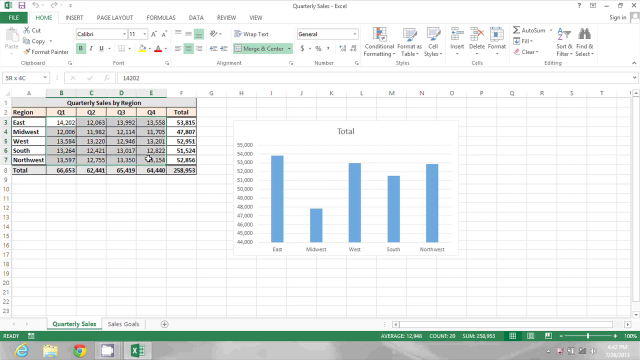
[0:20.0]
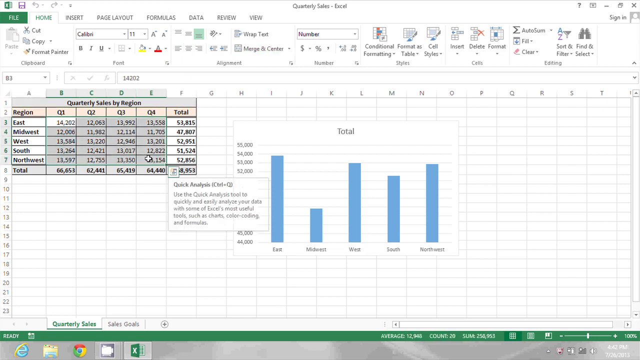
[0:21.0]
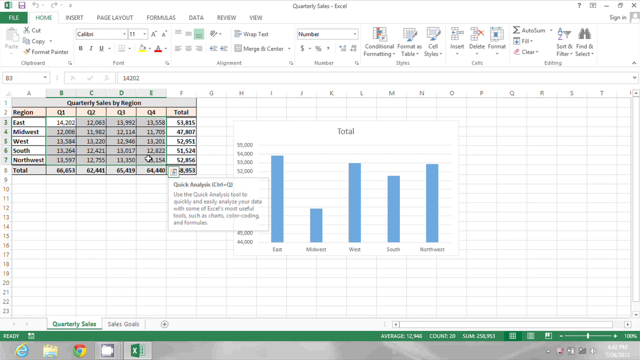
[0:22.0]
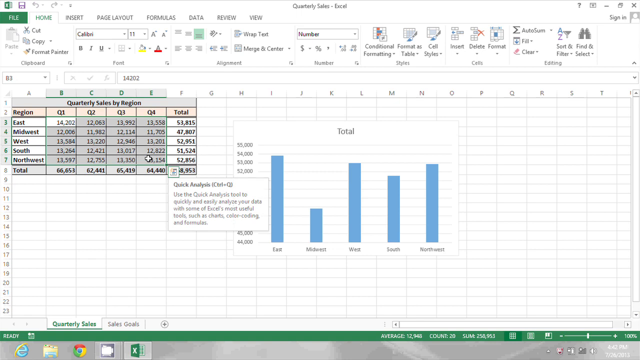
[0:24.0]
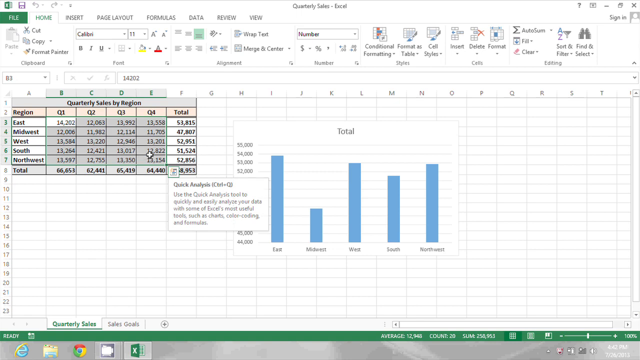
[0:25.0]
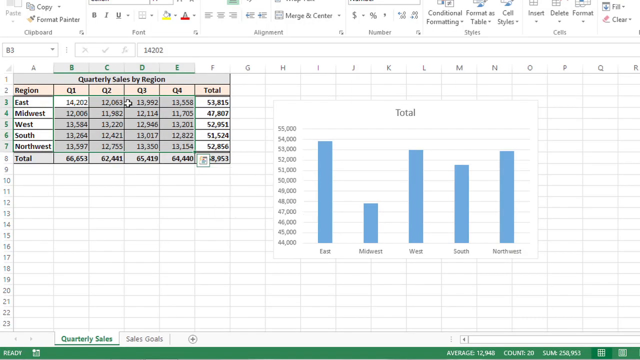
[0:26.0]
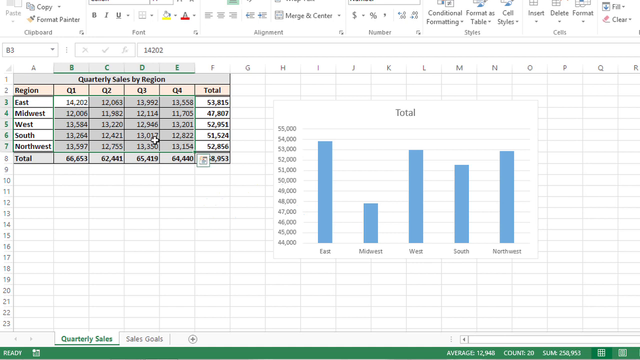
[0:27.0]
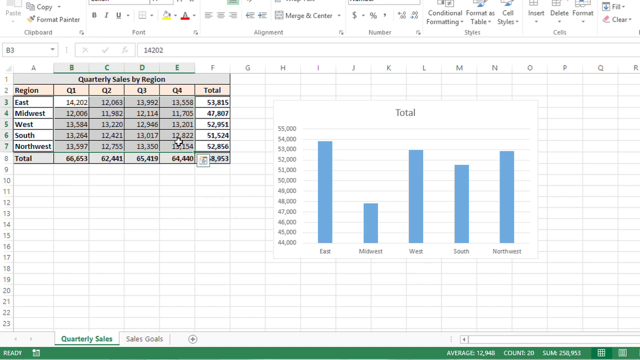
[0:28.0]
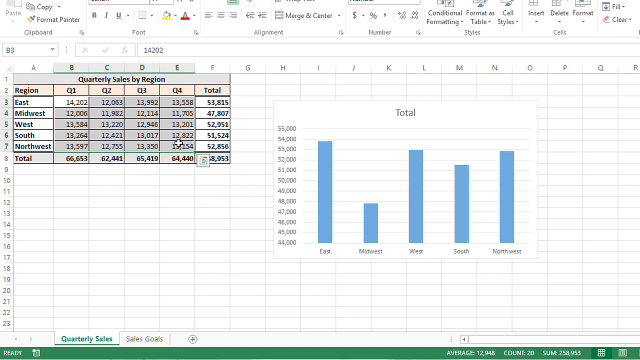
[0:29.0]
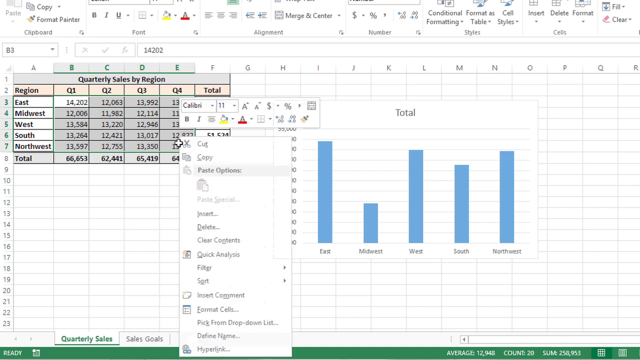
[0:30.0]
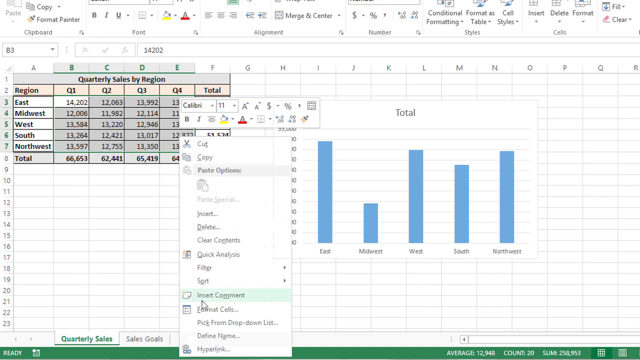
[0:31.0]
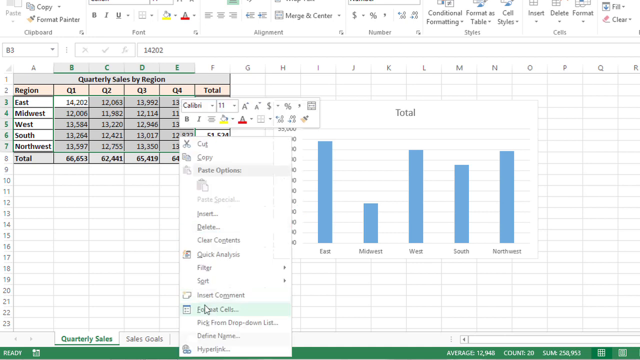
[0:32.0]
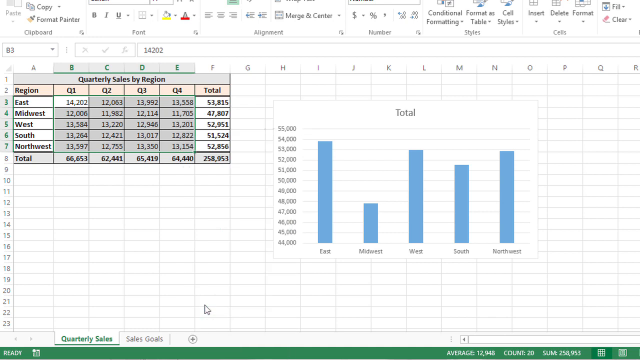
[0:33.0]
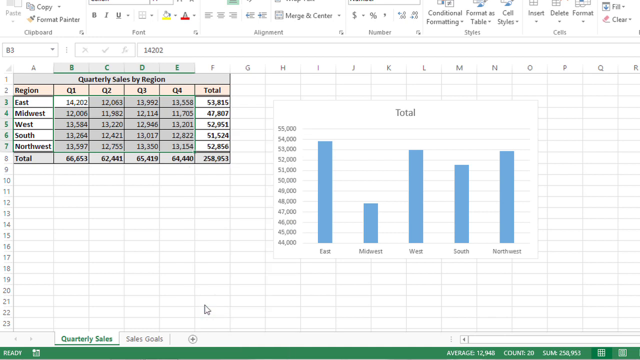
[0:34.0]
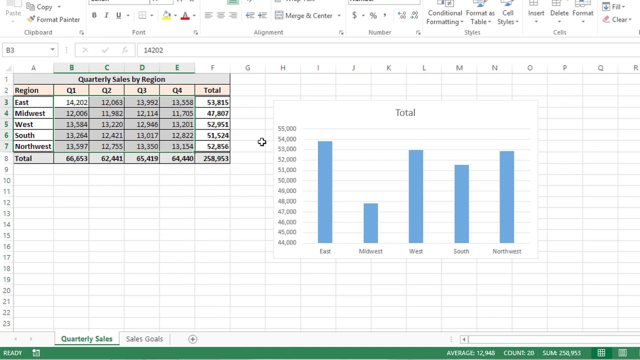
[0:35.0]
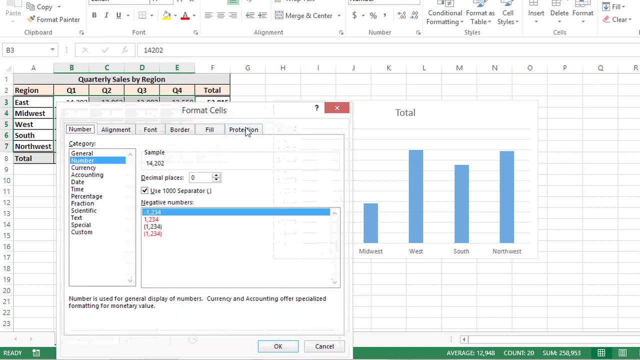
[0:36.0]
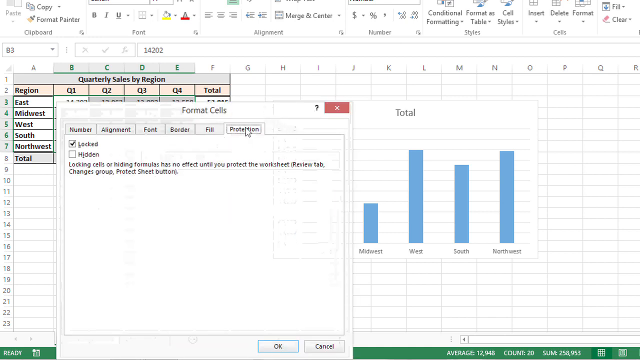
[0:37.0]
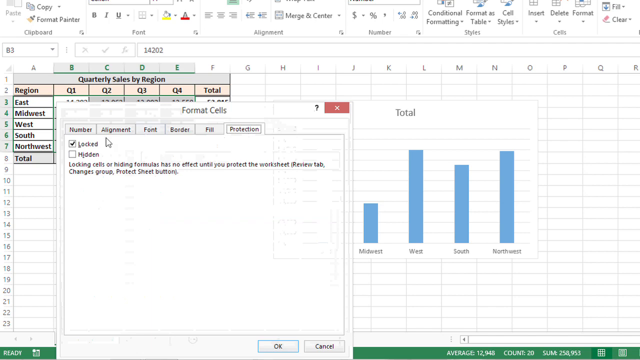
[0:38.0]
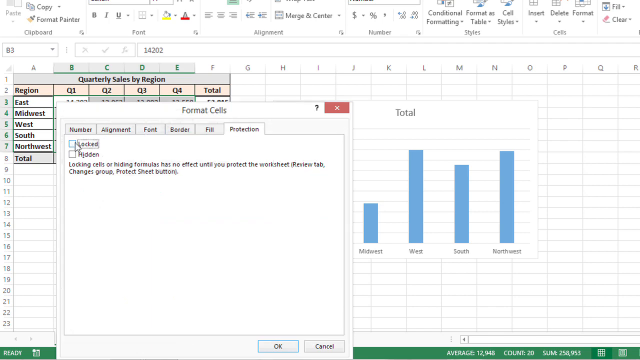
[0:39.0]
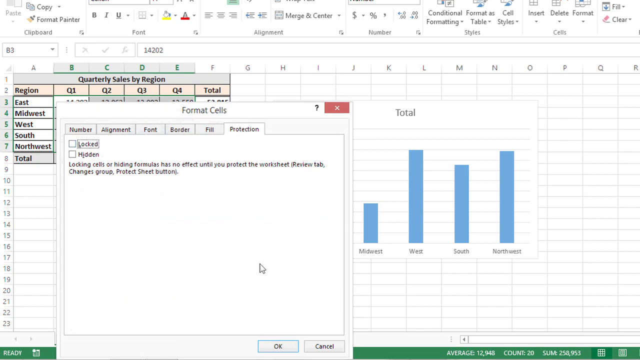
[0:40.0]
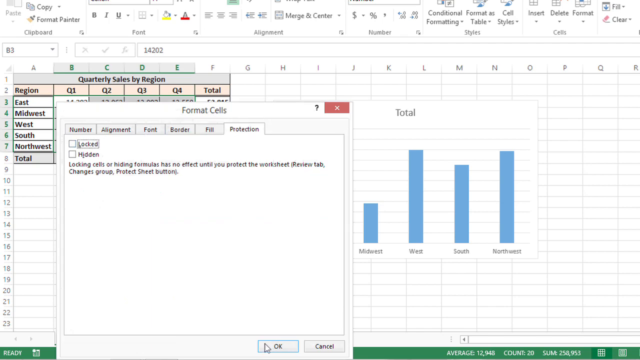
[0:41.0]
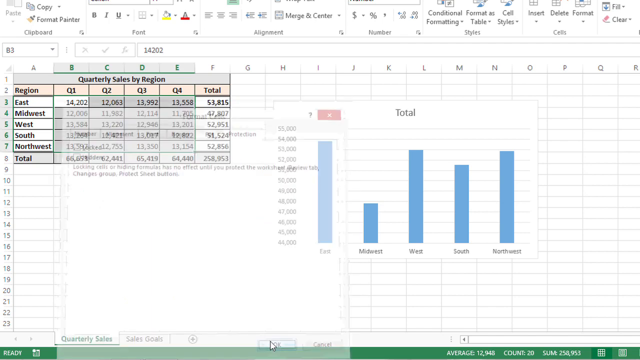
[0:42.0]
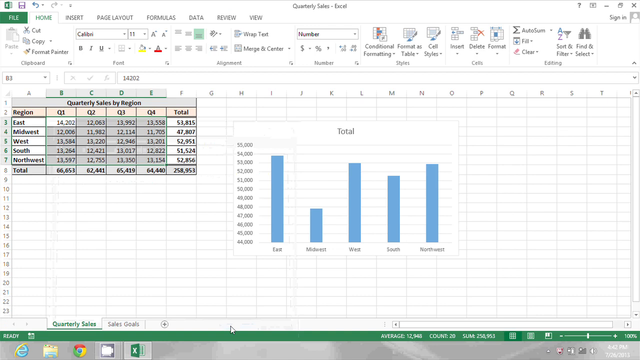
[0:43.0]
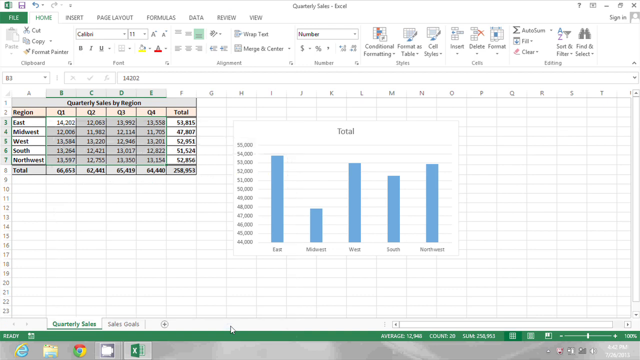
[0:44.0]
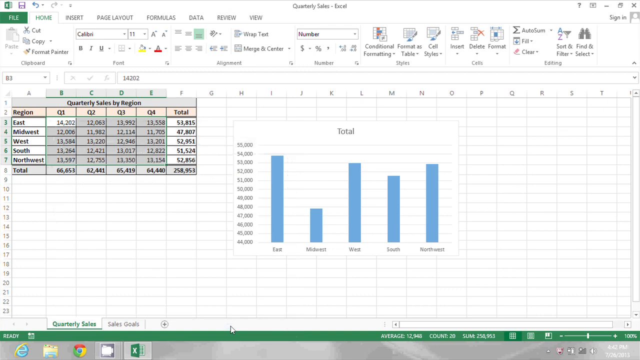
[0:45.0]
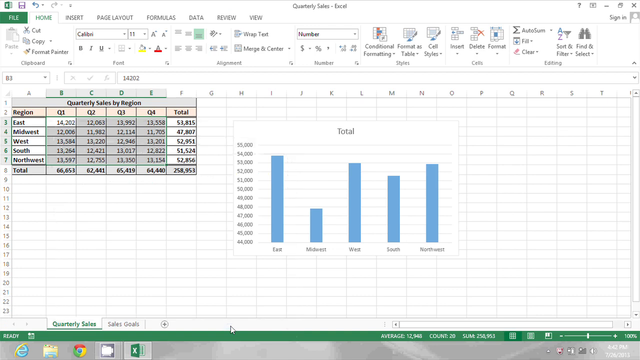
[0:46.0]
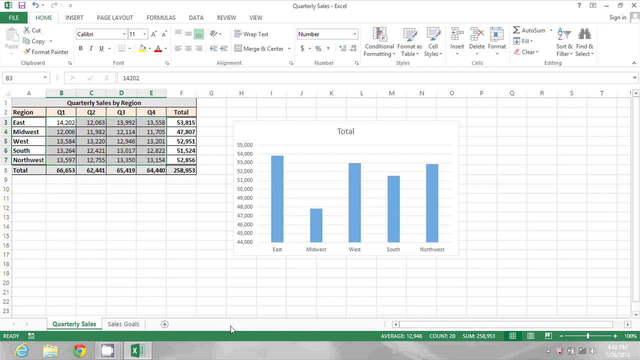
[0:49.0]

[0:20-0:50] She highlights all of the statistics in the region within the quarterly sales by region section. The screen slowly zooms into the top left corner, where the quarterly sales by region is visible, and she moves the mouse from the top left quarter one area down to the quarter four area. She right-clicks, moves the mouse down to the format cells option and clicks it, which opens the format cells window. She moves the mouse to the top bar of the window, which has six different sections, and clicks protection, the section at the very end. She then moves to the locked option, which is already checked, and unchecks it. Next she goes to the OK button at the bottom of the window, which closes it, and the entire Excel screen is visible again. The mouse stays still at the bottom of the screen until it moves slightly to the left toward the quarterly sales area.